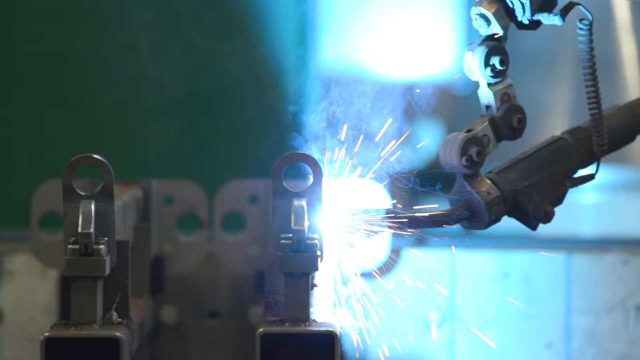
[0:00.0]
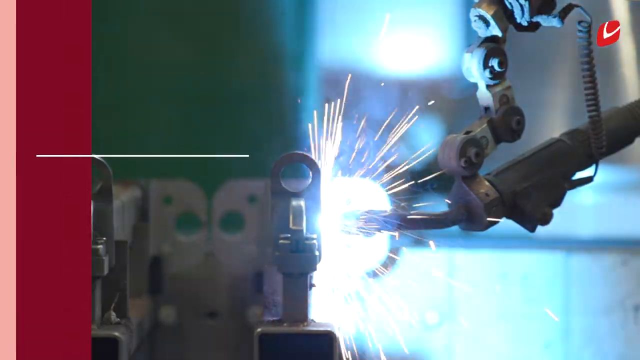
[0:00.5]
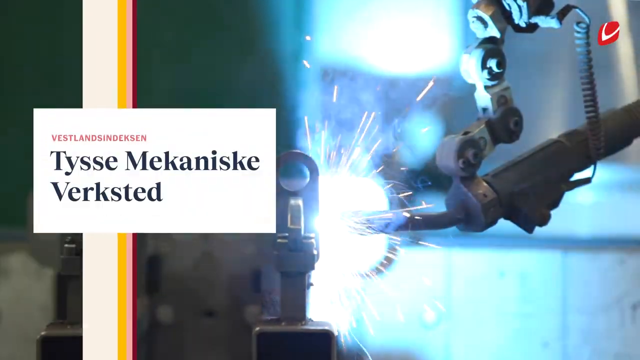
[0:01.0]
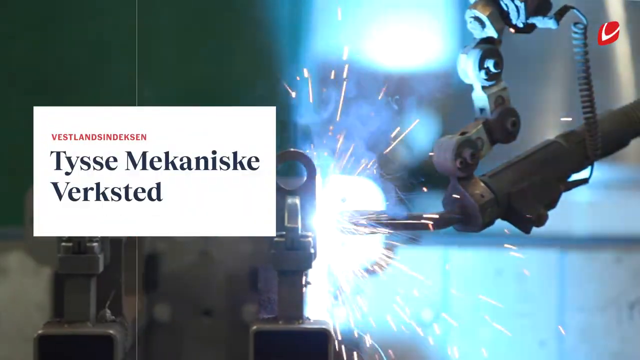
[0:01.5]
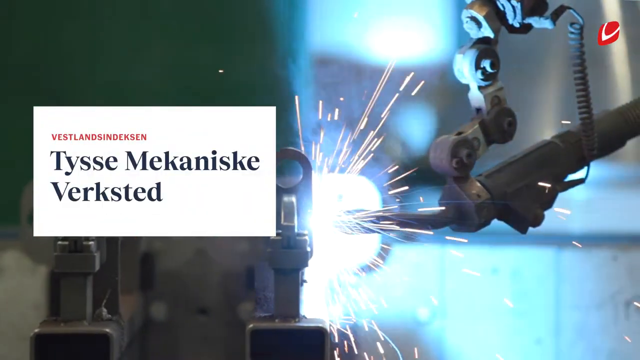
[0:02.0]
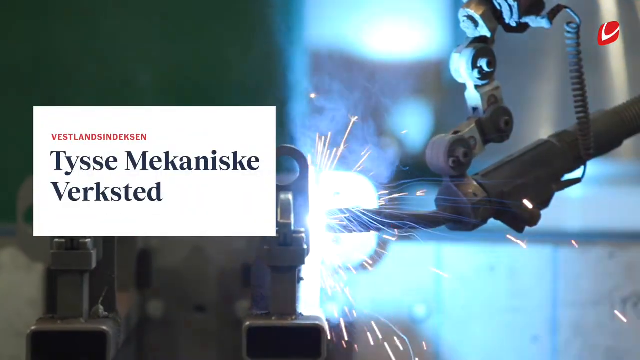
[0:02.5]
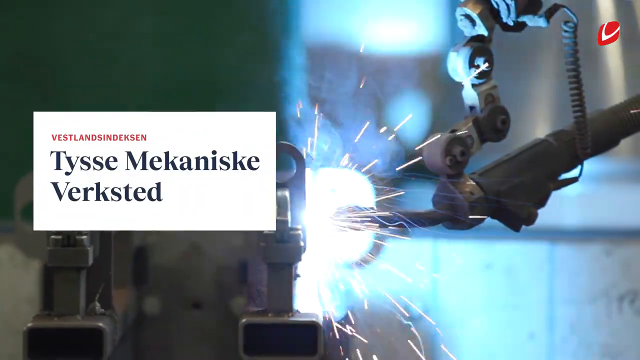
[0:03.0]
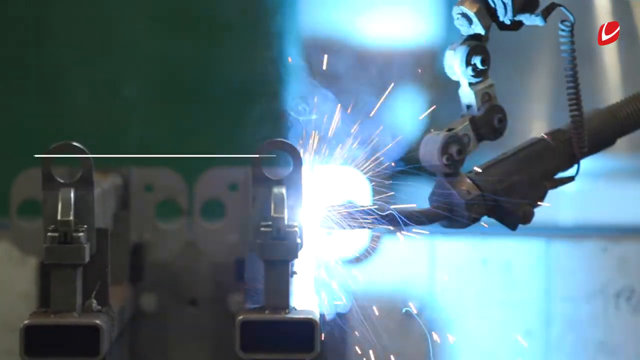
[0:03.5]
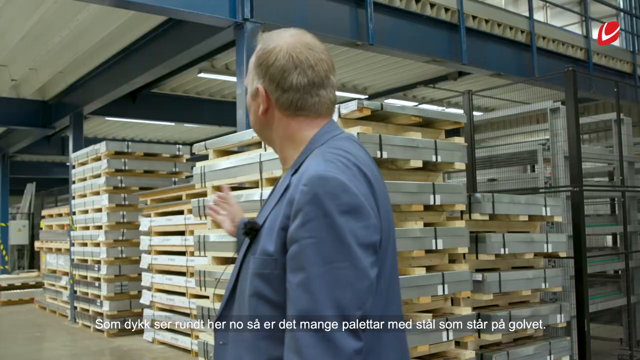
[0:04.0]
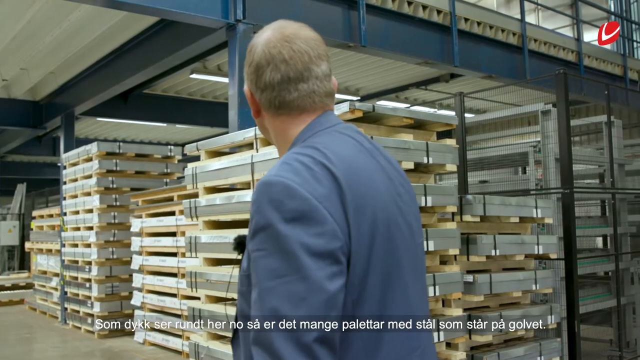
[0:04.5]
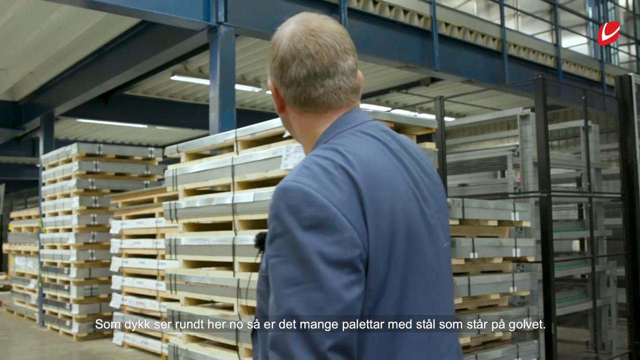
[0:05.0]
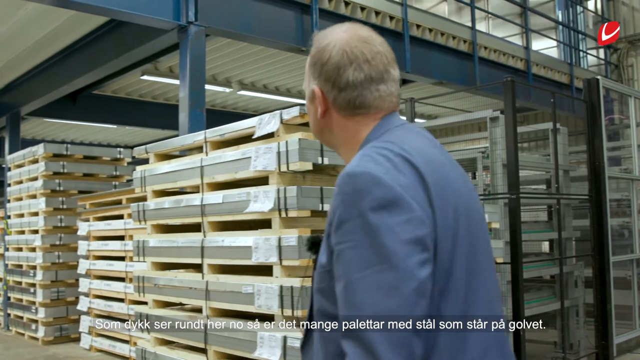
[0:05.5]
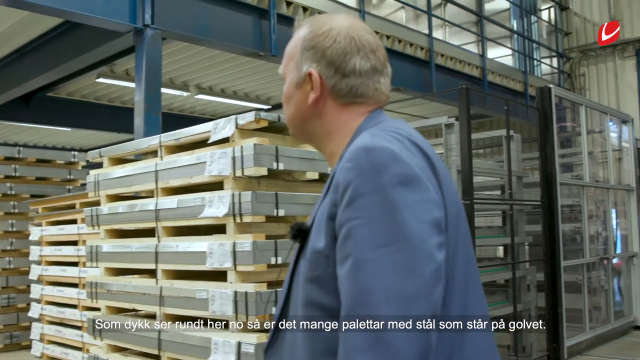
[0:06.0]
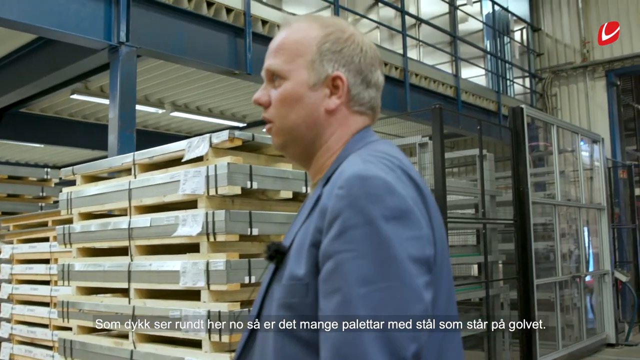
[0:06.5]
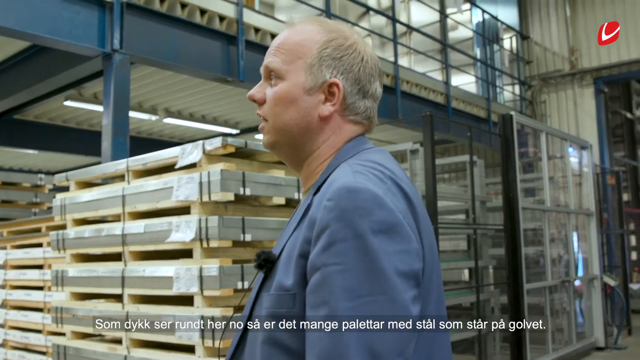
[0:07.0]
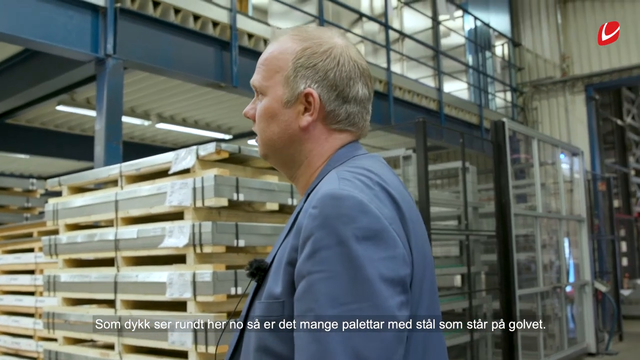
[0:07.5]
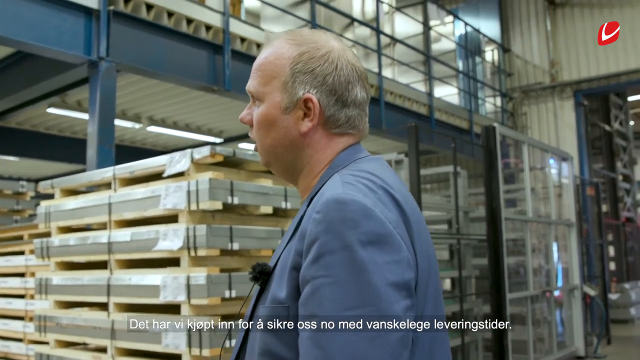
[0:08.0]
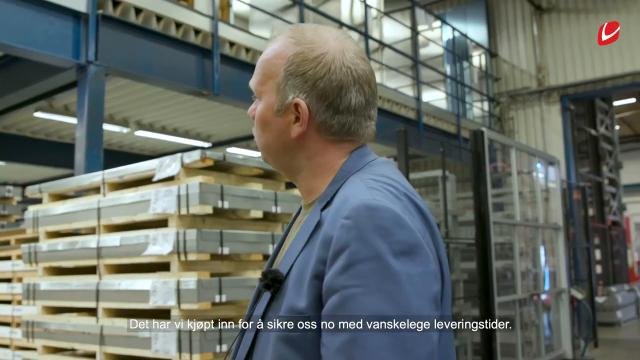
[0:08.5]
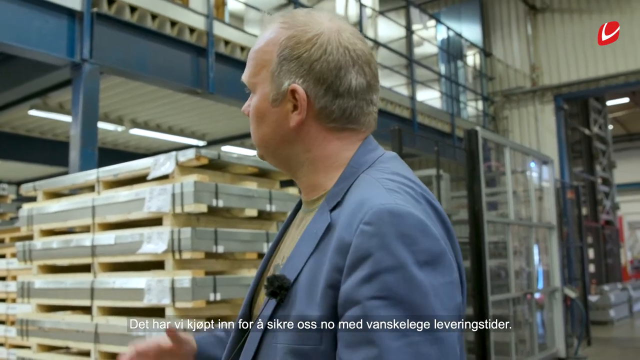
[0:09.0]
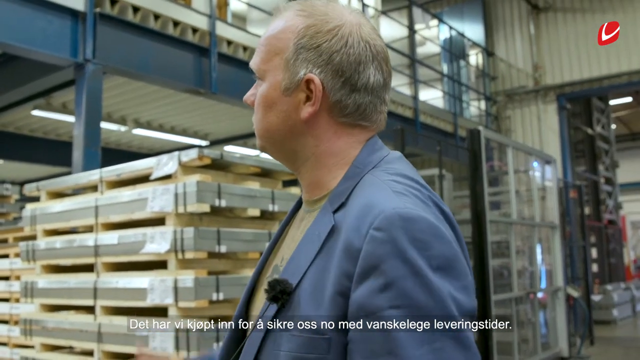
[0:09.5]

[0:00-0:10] Something appears to be sparking, like a machine; it is unclear whether it is on fire. Subtitles appear in a language other than English. Words come up in black font: "TYSSE", then "MEKANISKE", and underneath that "VERKSTED".